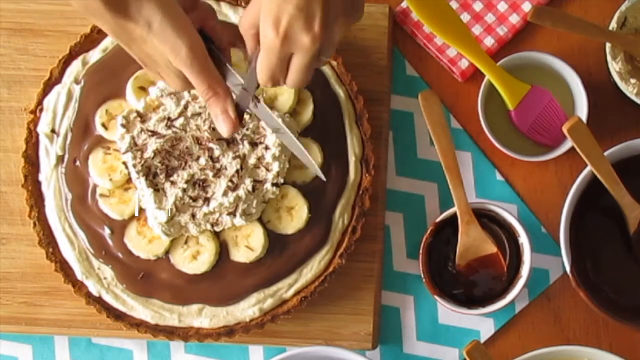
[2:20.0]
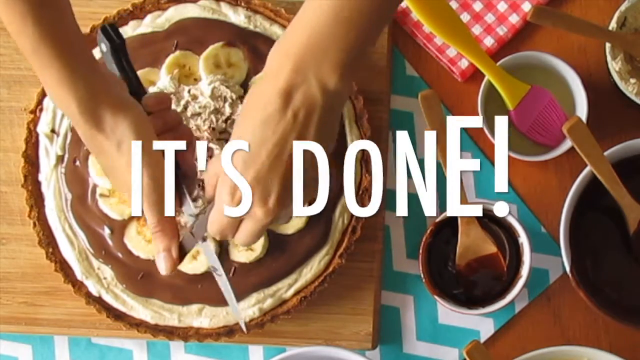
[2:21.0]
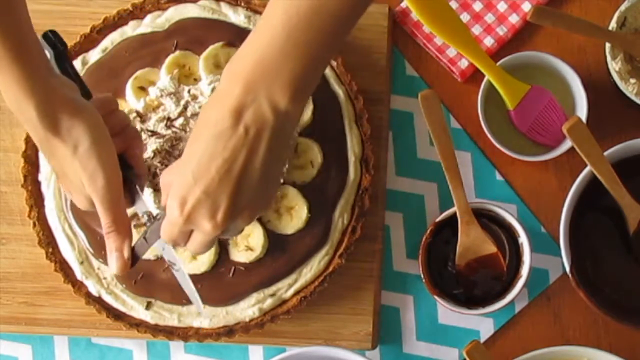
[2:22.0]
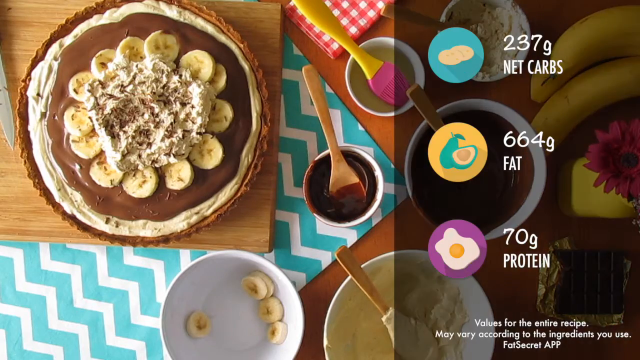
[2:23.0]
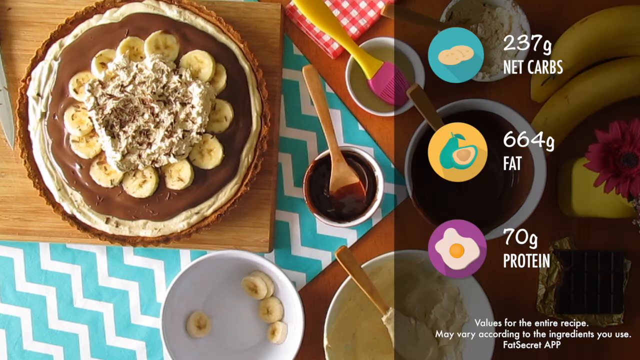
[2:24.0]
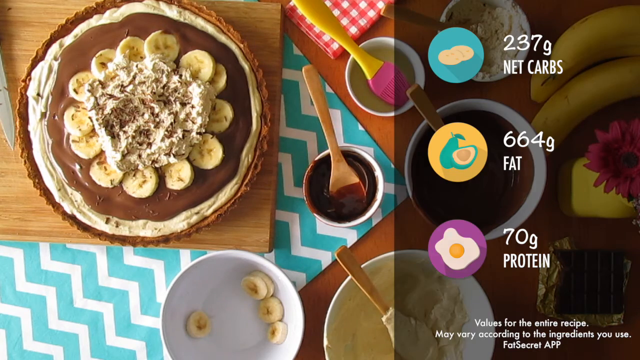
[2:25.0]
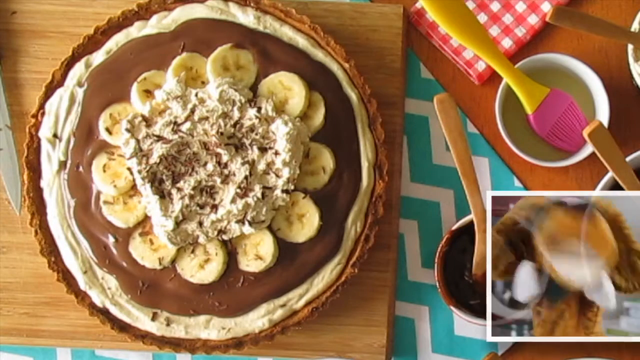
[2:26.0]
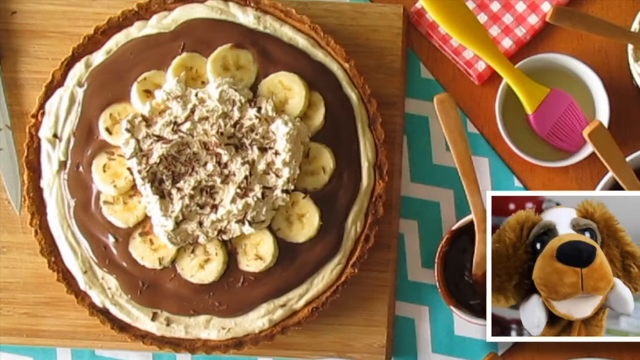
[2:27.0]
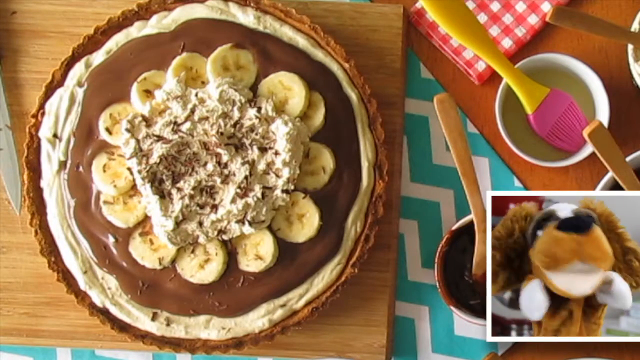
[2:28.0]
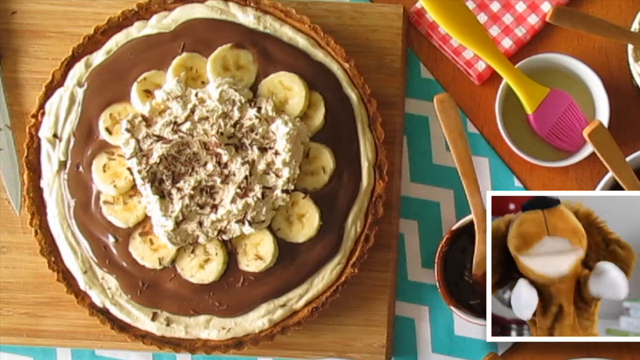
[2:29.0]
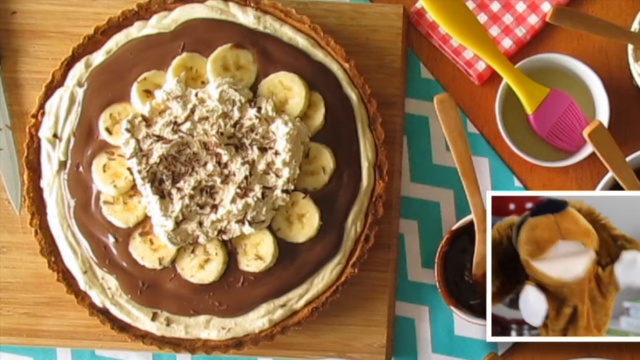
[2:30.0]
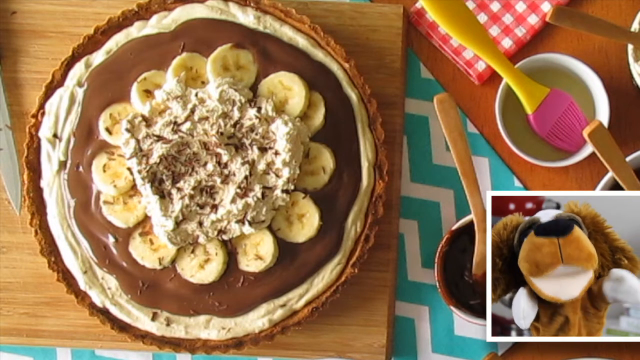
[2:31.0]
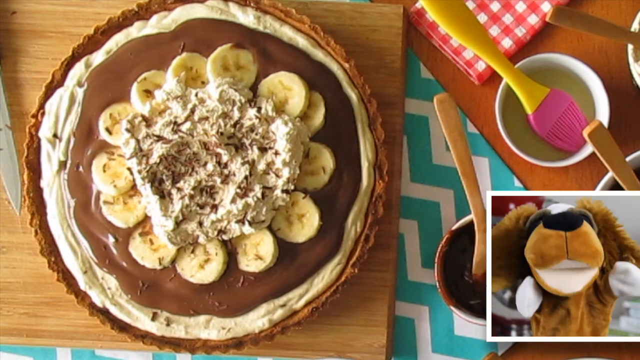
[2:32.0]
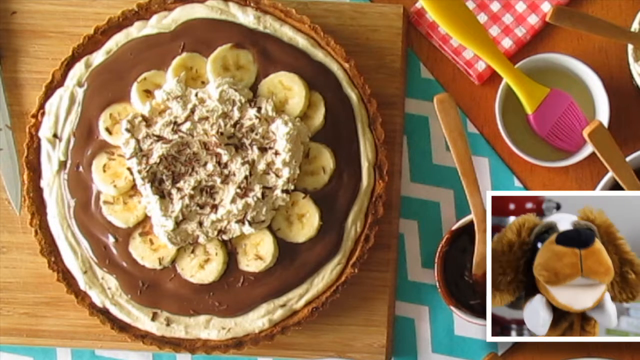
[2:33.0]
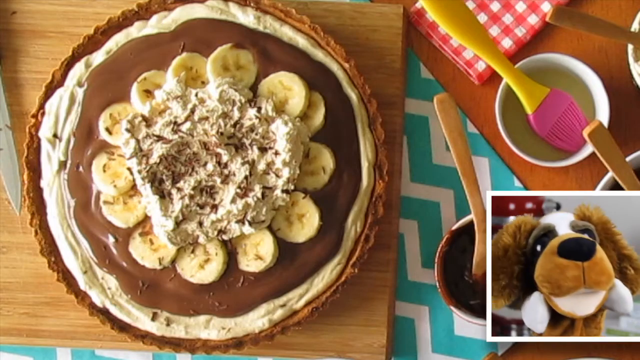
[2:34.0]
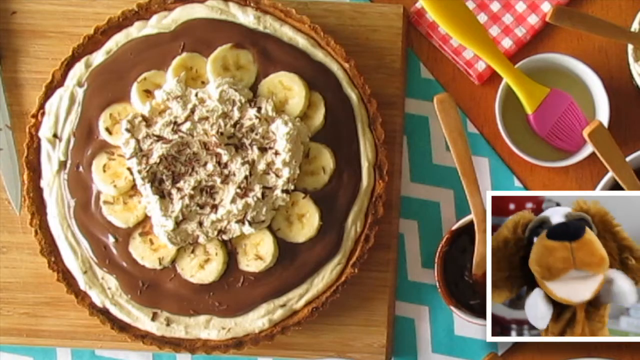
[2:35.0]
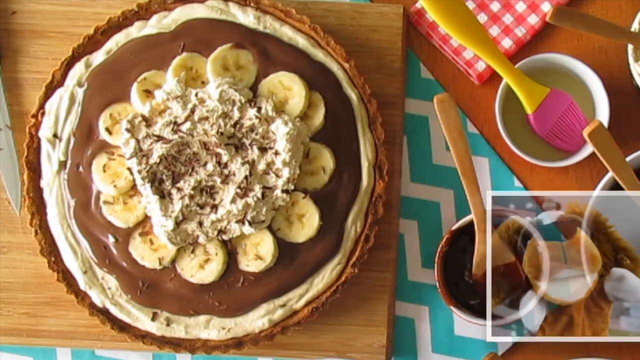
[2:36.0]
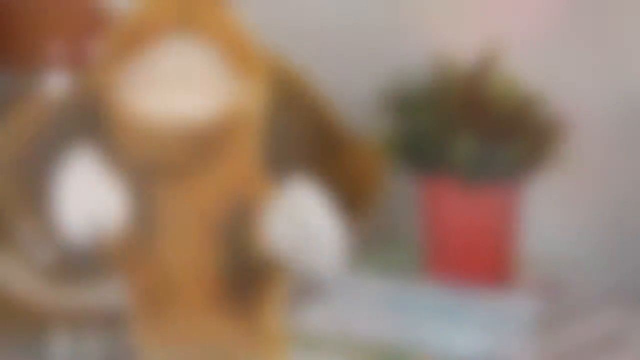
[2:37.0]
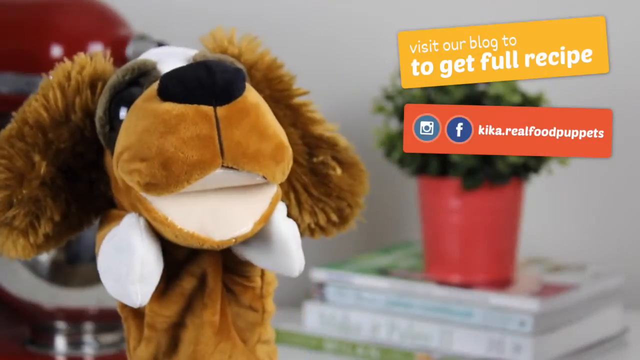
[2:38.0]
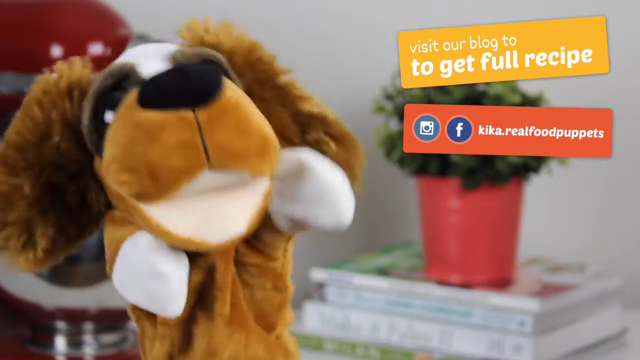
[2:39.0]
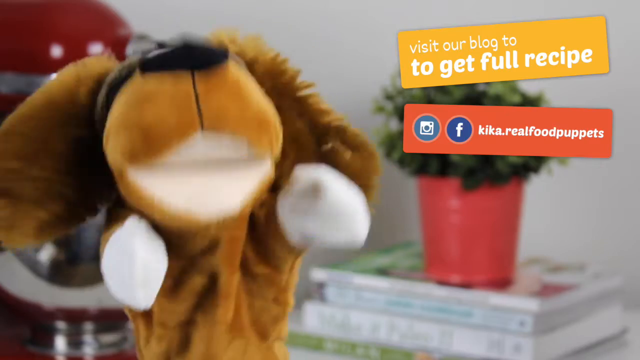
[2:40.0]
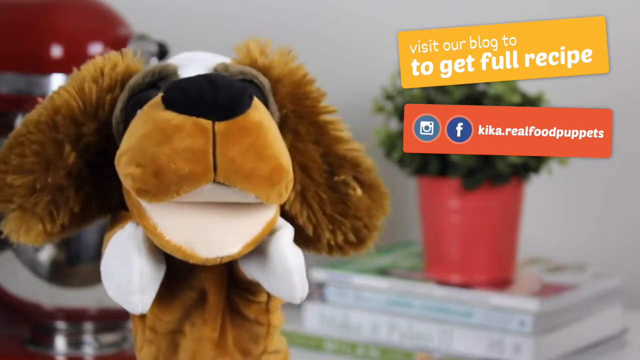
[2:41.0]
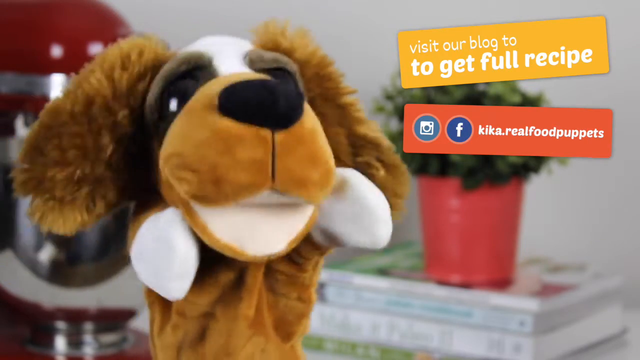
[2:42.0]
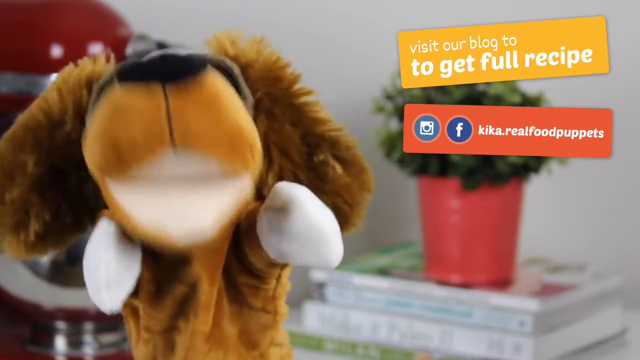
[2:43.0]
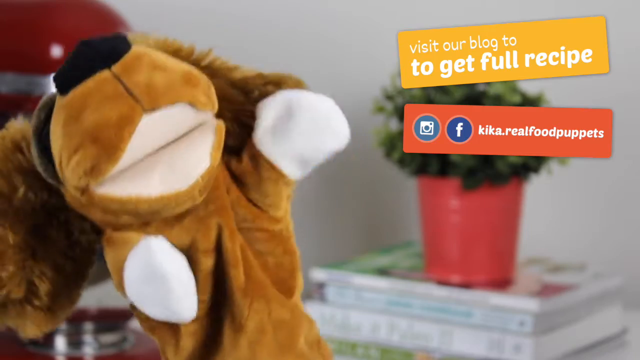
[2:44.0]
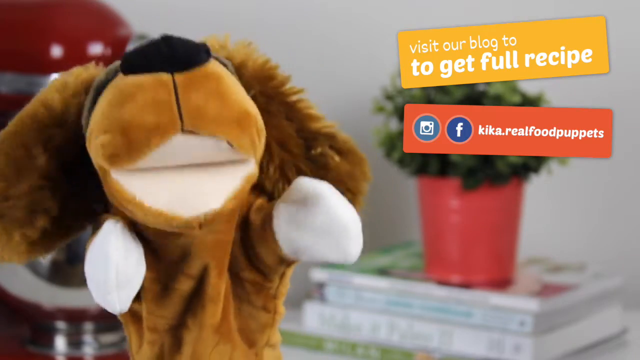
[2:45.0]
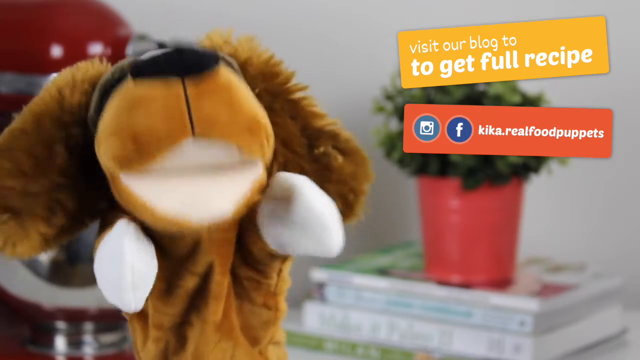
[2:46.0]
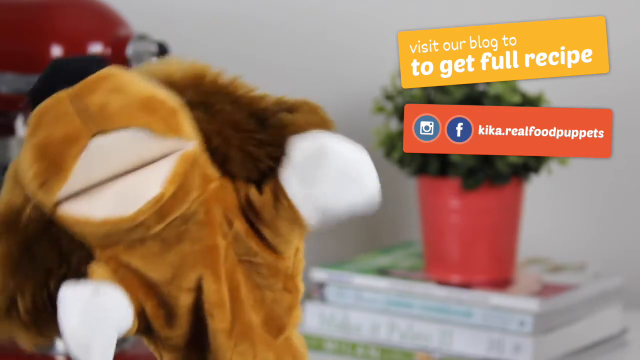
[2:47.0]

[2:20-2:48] The pie is on a wooden chopping board, with the blue and white waved tablecloth and a red and white gingham napkin in the background. Bowls of other ingredients such as the lemon juice and chocolate ganache are visible; each bowl has a wooden spoon except the lemon juice, which has a plastic brush. The top of the pie is decorated with shaved dark chocolate, and on-screen text very briefly reads "it's done". The video cuts to a top-down picture of the pie with little icon diagrams at the side and text next to them reading "237 grams net carbs, 664 grams of fat, 70 grams of protein". It then cuts to a closer picture of the pie, and the dog puppet appears embedded in the bottom right-hand corner, appearing to try to explain something. Next the dog puppet fills the full screen, and a yellow box with white writing reads "visit our blog to get the full recipe". Finally a coral-coloured box shows an Instagram logo and a Facebook logo with white writing reading "kika.realfoodpuppets".